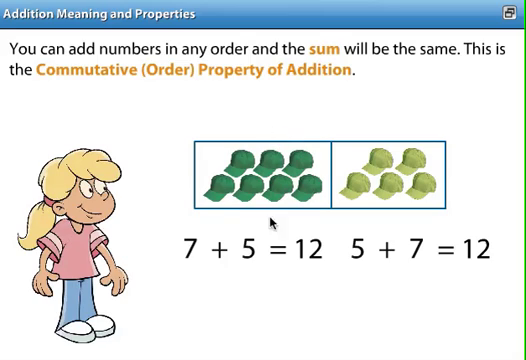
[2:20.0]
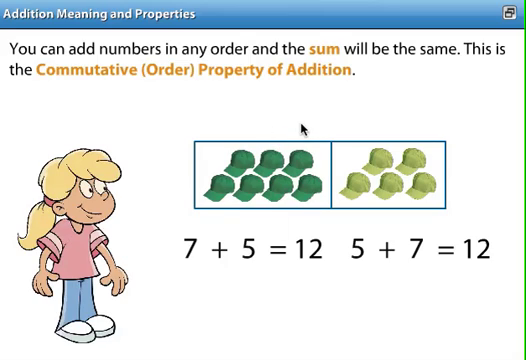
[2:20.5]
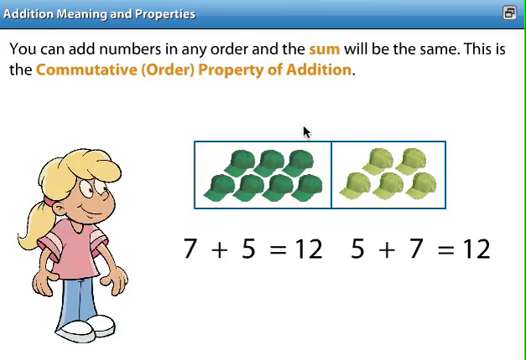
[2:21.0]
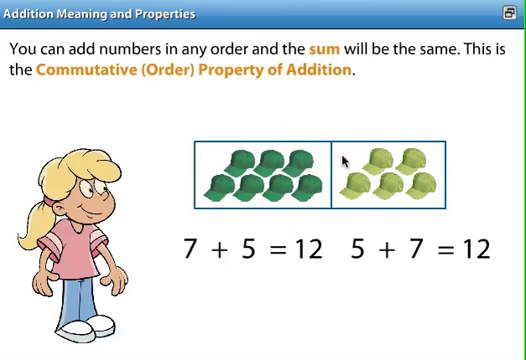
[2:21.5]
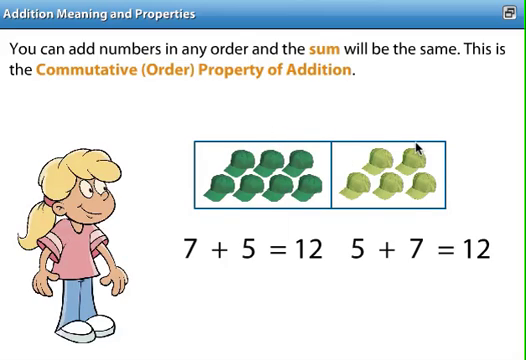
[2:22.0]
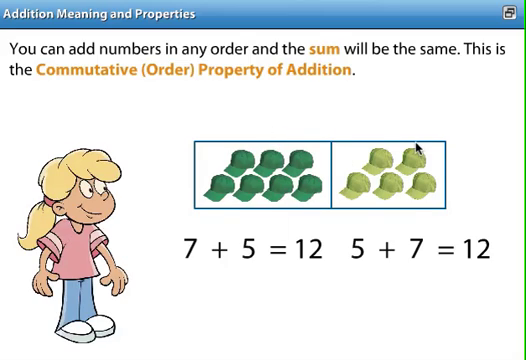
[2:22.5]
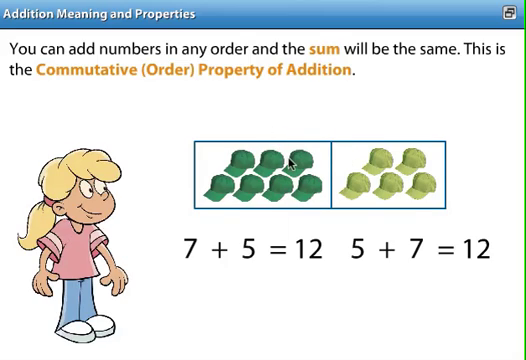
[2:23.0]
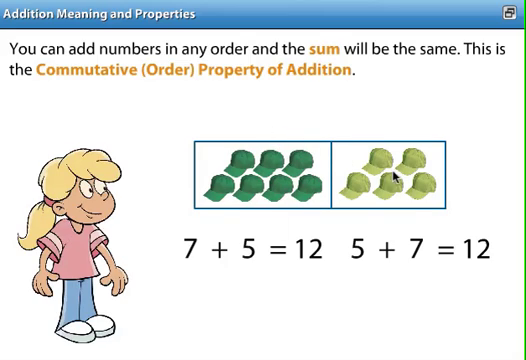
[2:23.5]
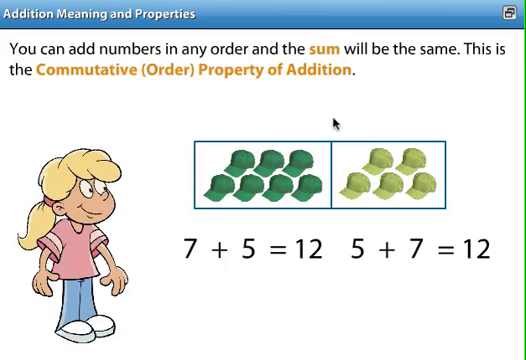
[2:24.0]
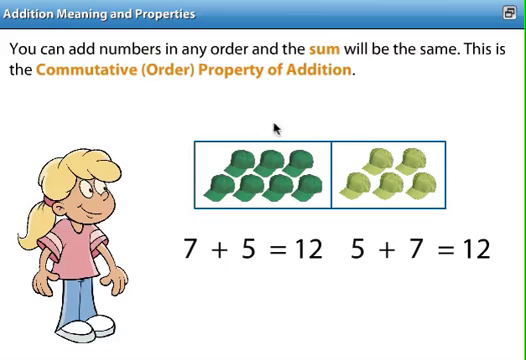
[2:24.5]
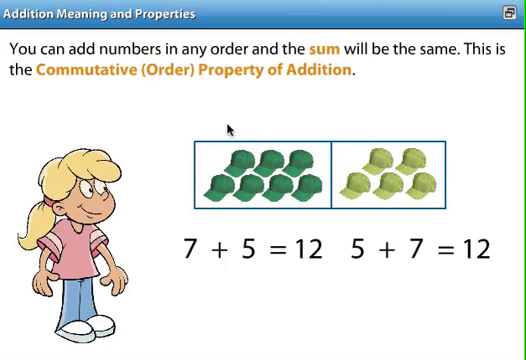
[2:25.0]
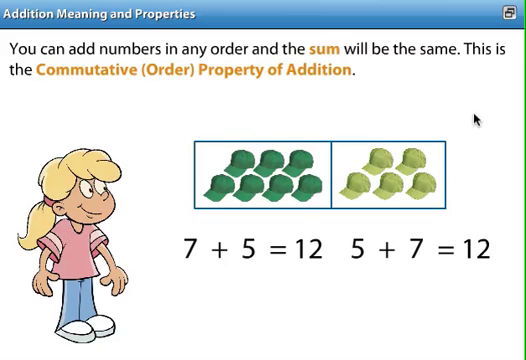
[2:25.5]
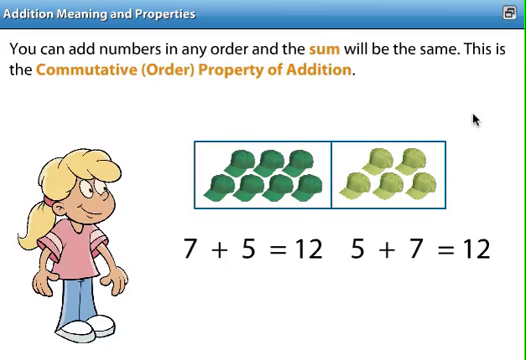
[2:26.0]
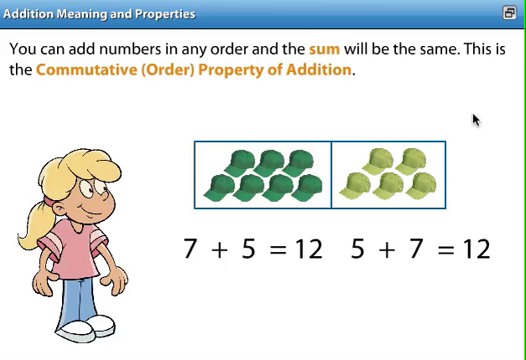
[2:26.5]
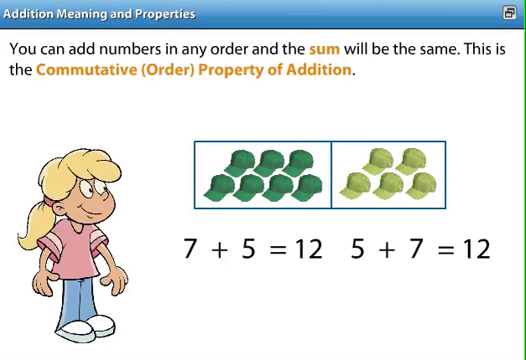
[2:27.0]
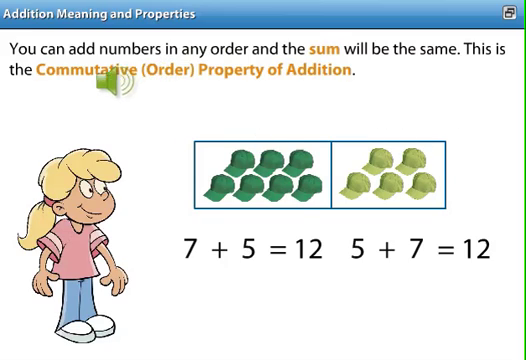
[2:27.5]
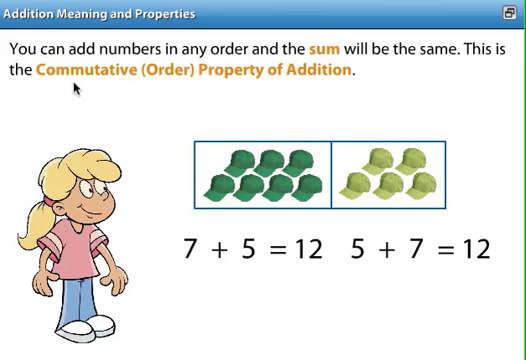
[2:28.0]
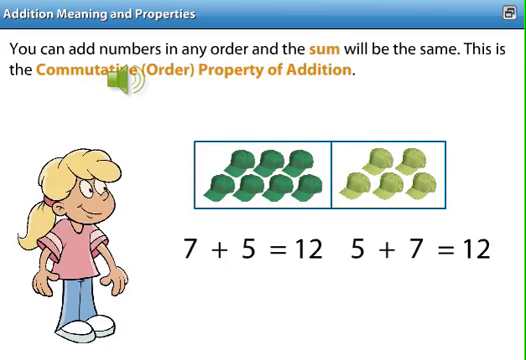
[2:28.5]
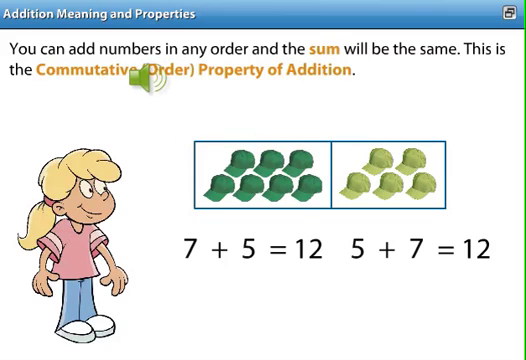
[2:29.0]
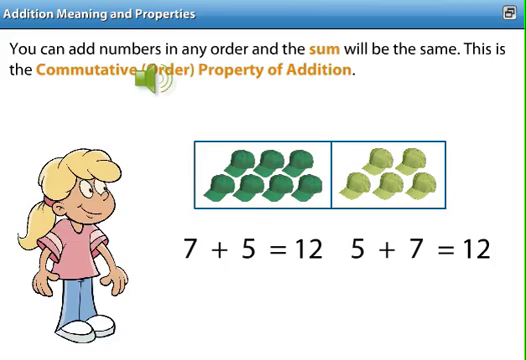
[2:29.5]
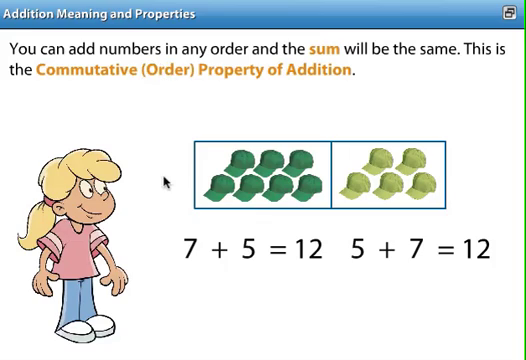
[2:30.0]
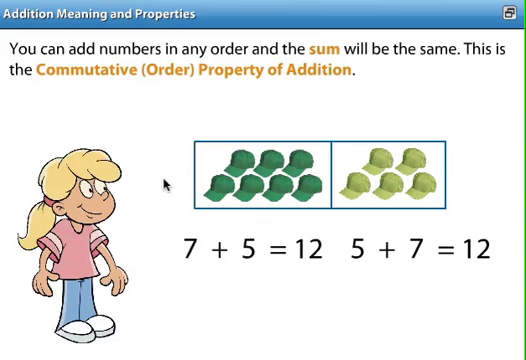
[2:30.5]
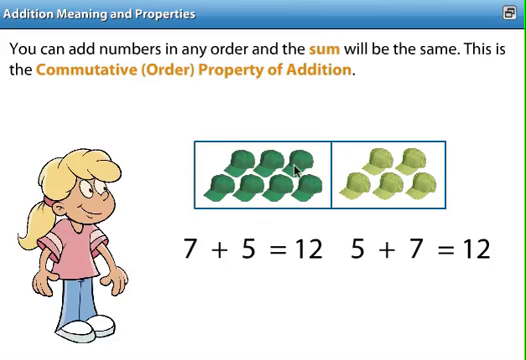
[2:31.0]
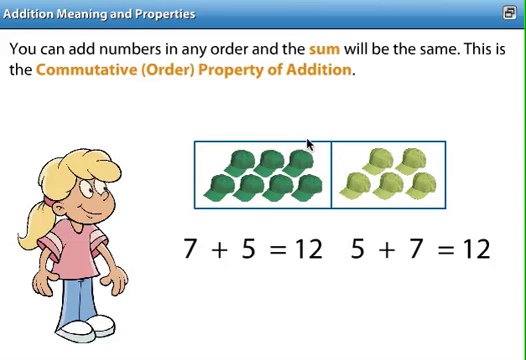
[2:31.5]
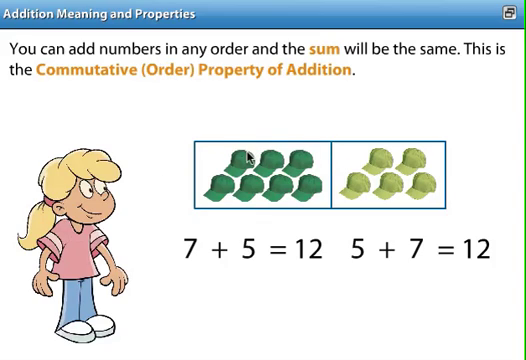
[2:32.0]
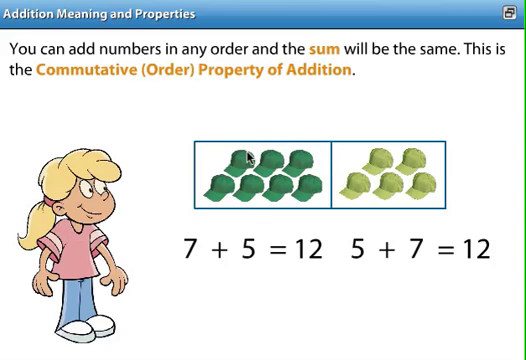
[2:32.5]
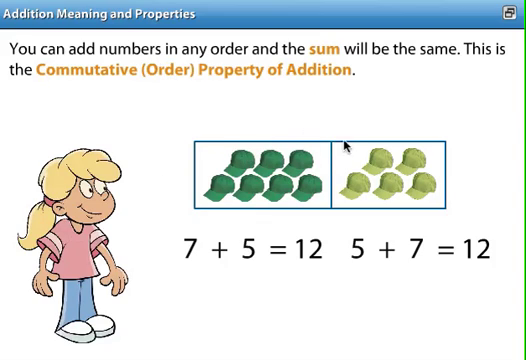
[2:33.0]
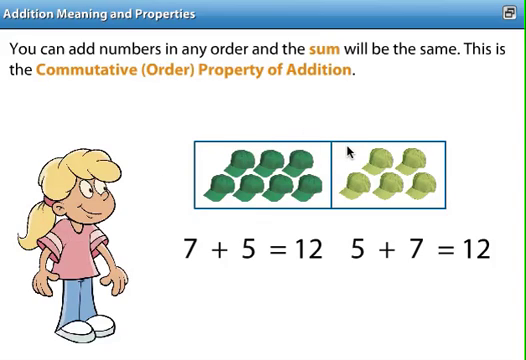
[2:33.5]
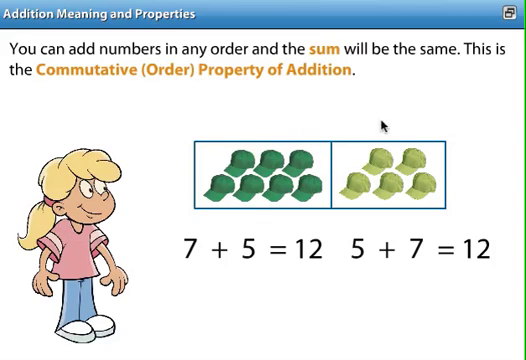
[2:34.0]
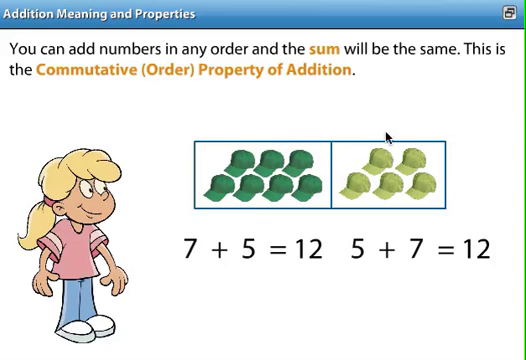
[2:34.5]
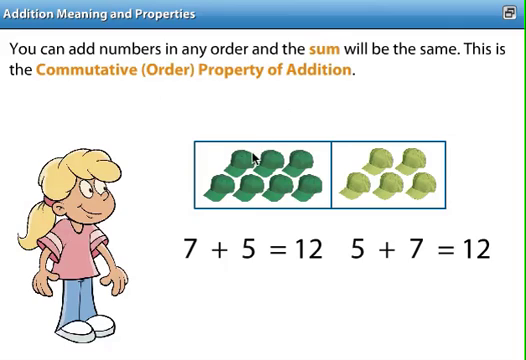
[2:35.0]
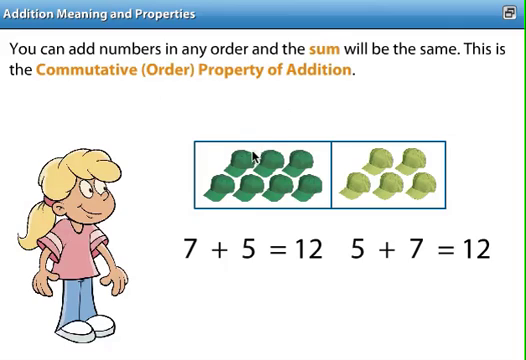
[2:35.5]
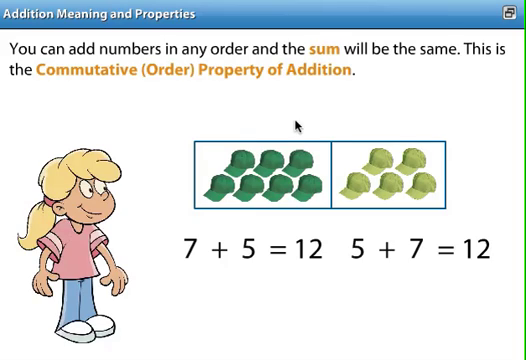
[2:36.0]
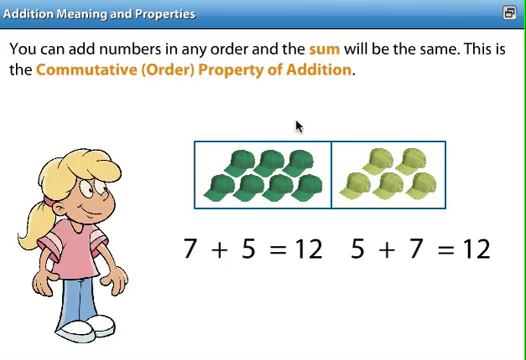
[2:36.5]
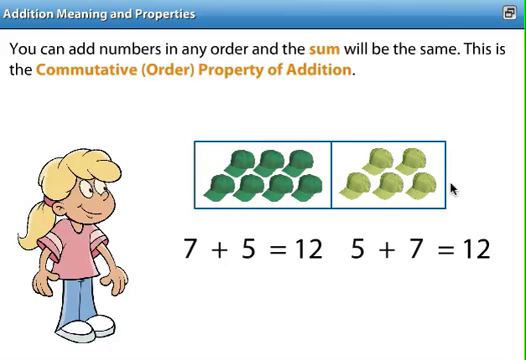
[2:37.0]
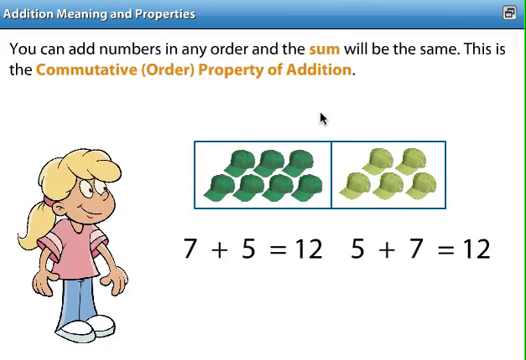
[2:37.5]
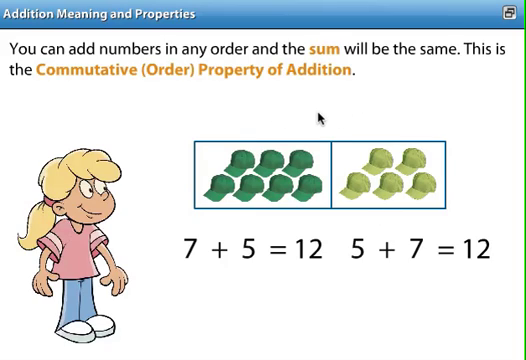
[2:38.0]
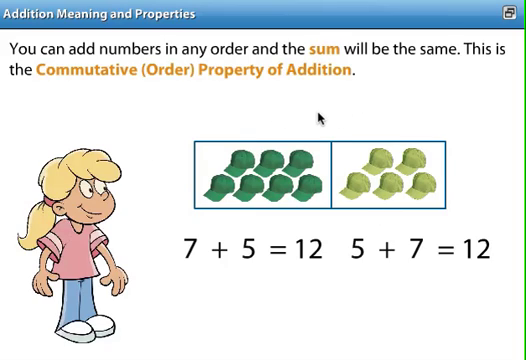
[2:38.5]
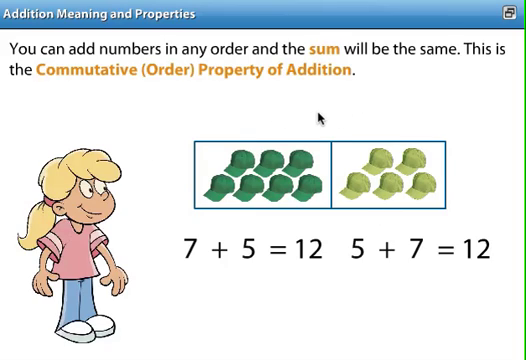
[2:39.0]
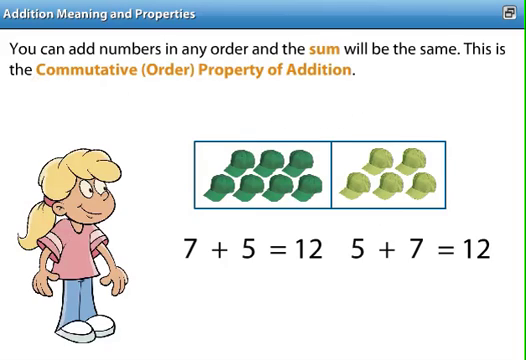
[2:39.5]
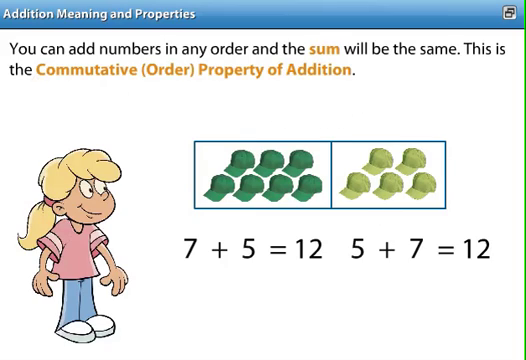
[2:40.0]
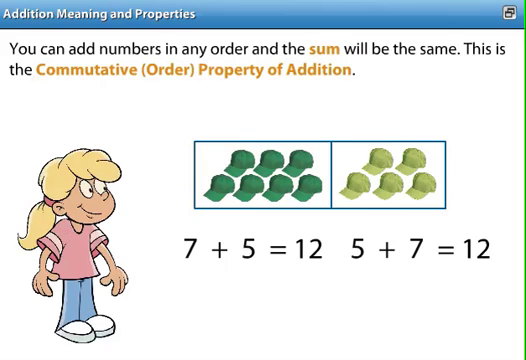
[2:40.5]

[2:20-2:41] The cursor moves between the rectangles containing the differently colored hats in different numbers. When it moves to the upper portion of the screen, it changes into a speaker symbol. The cartoon character stays focused on the equation and the hats inside the rectangles. The top sentence remains unchanged, reading "you can add numbers in any order and the sum will be the same. This is the commutative order property of addition," with the word "order" in parentheses and the word "sum" and "commutative order property of addition" highlighted in yellow. The cursor moves around in an explanatory fashion, possibly drawing attention to different parts of the equations.